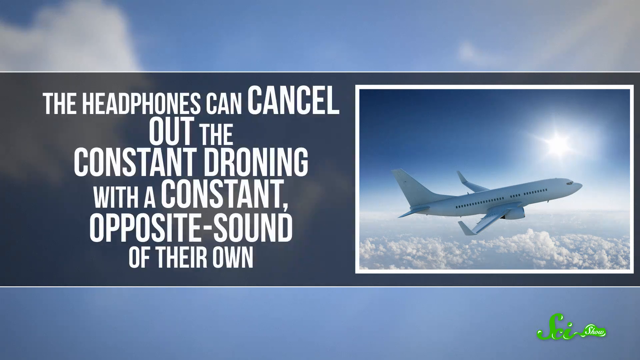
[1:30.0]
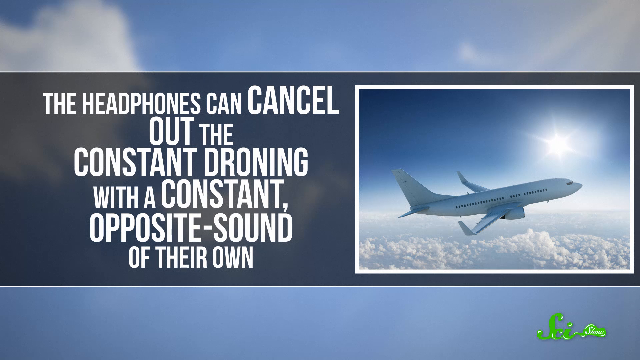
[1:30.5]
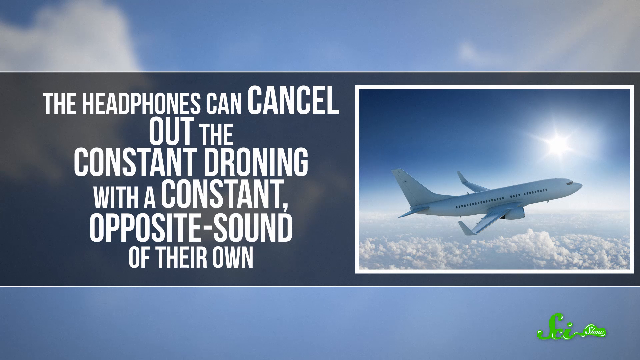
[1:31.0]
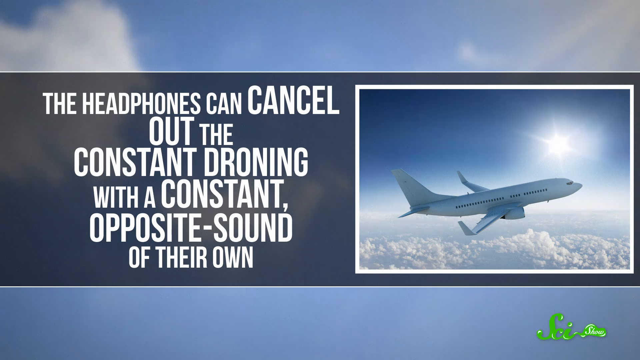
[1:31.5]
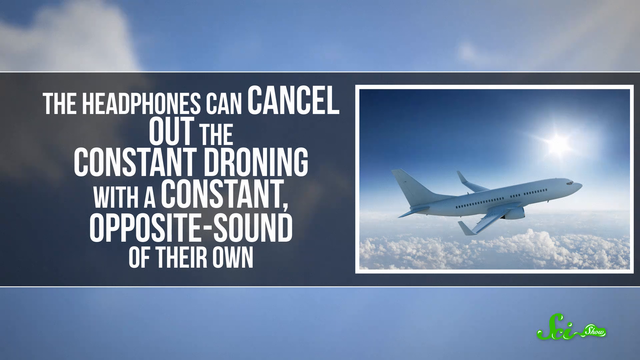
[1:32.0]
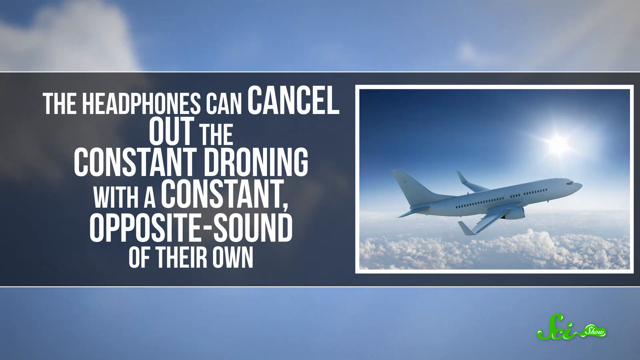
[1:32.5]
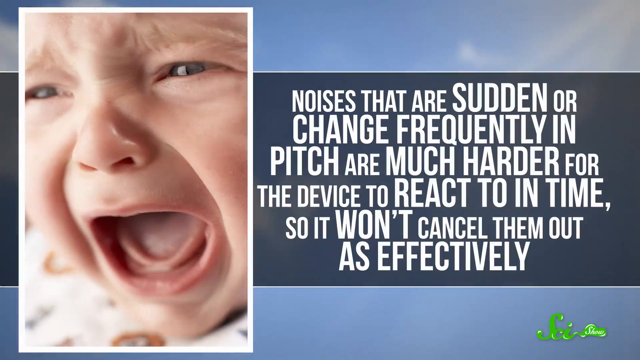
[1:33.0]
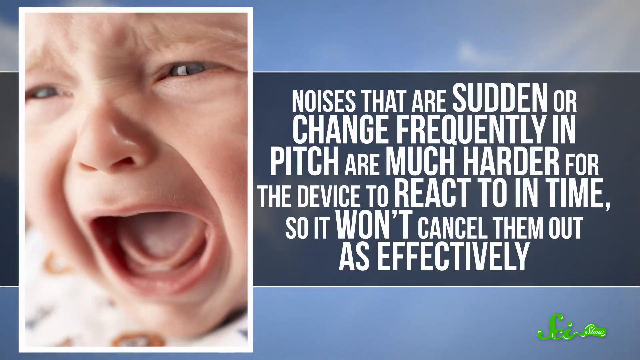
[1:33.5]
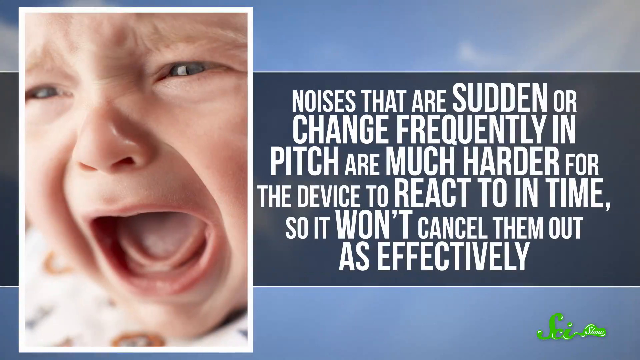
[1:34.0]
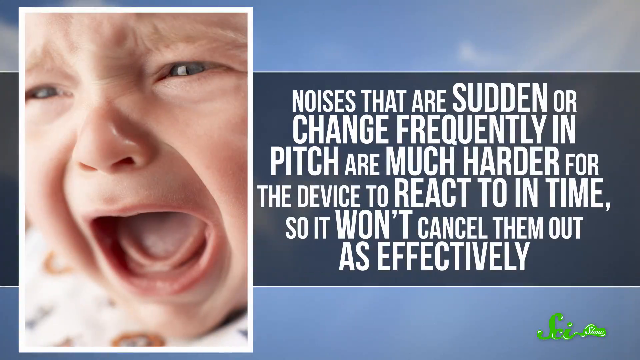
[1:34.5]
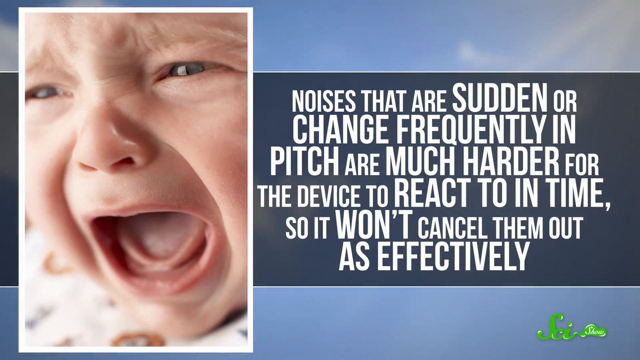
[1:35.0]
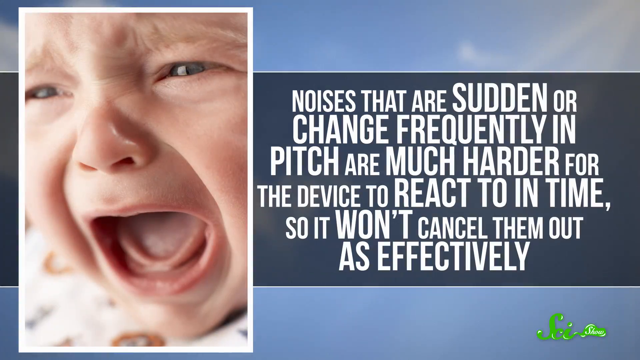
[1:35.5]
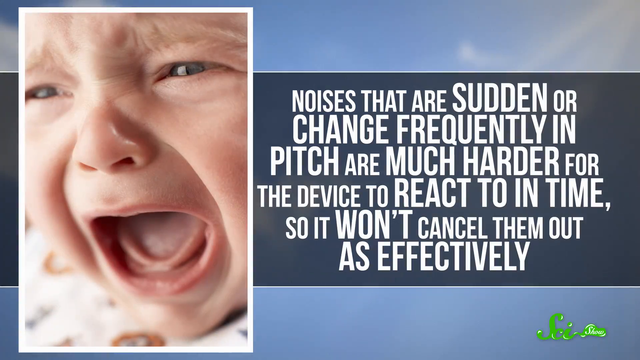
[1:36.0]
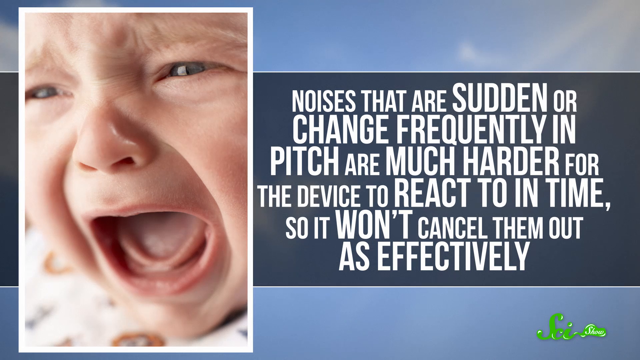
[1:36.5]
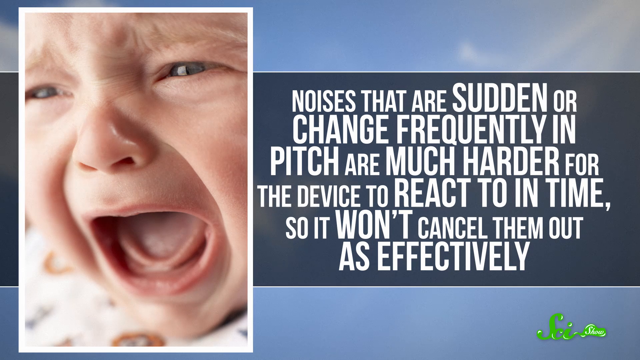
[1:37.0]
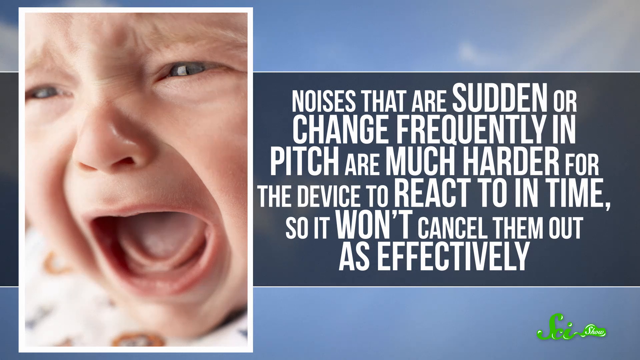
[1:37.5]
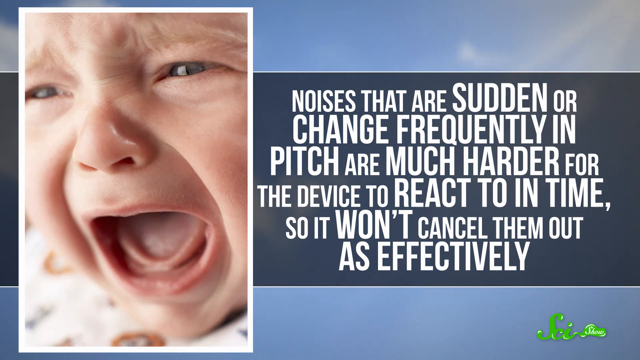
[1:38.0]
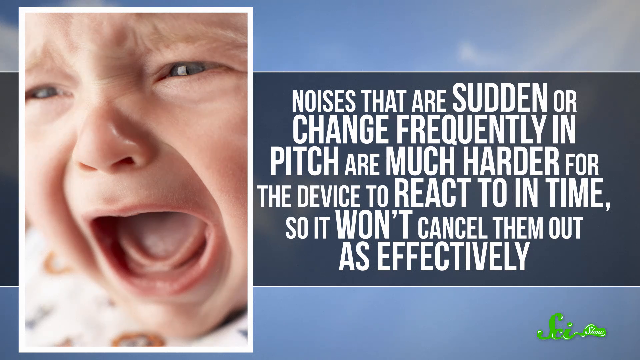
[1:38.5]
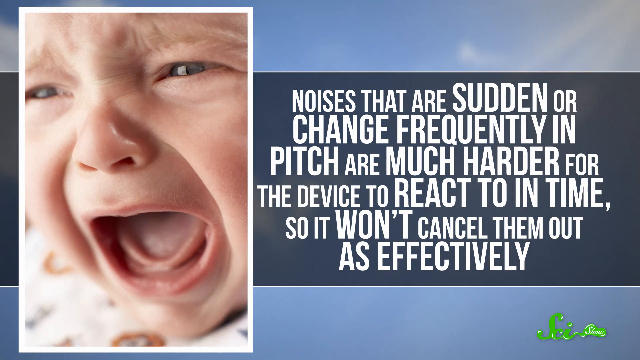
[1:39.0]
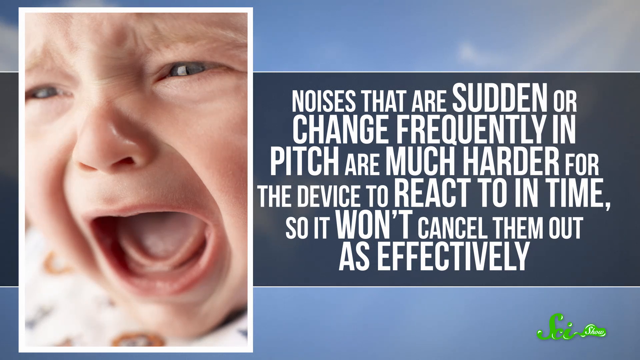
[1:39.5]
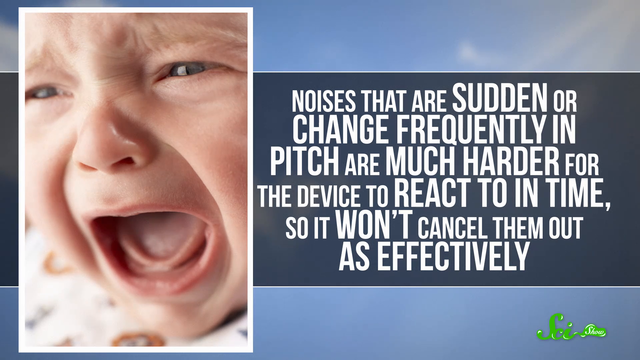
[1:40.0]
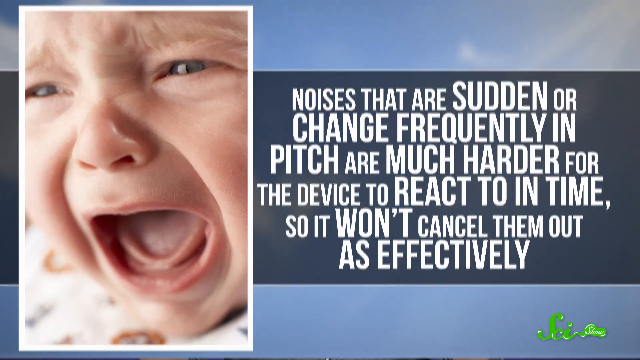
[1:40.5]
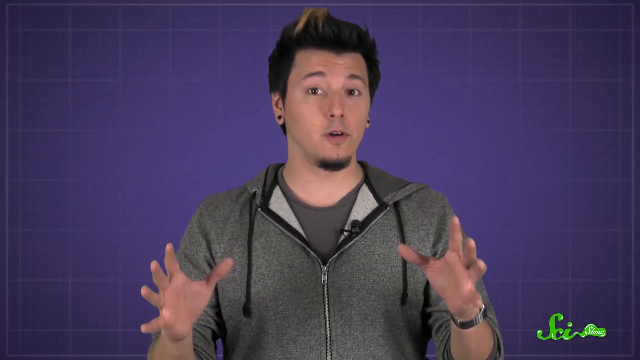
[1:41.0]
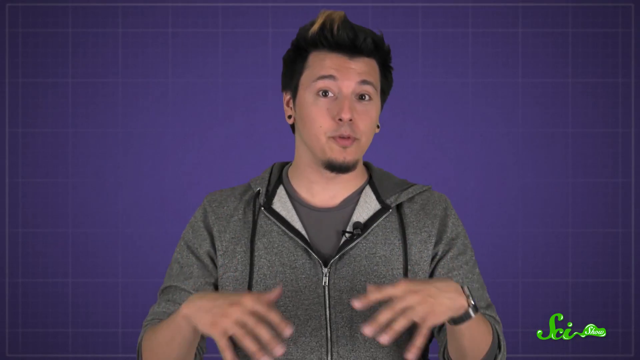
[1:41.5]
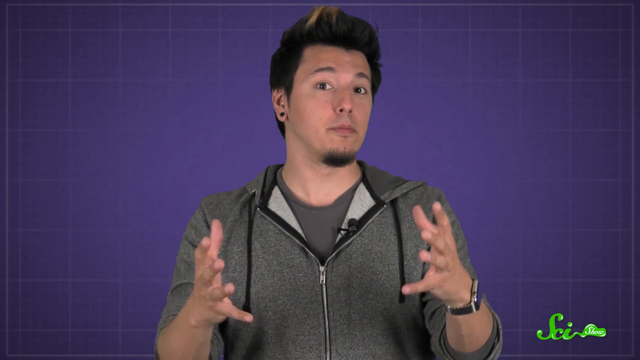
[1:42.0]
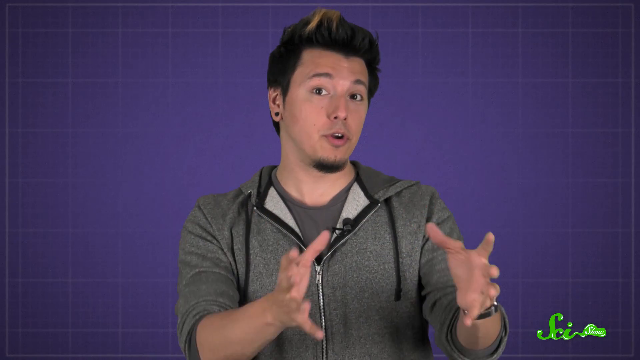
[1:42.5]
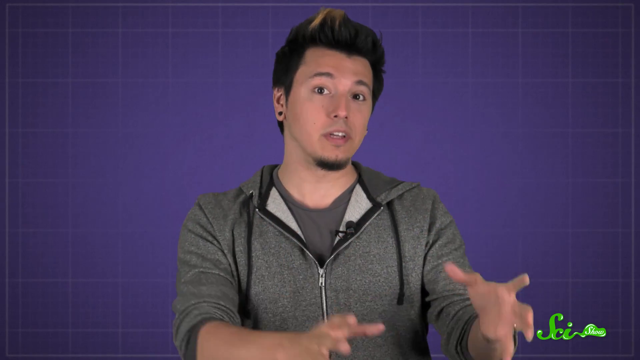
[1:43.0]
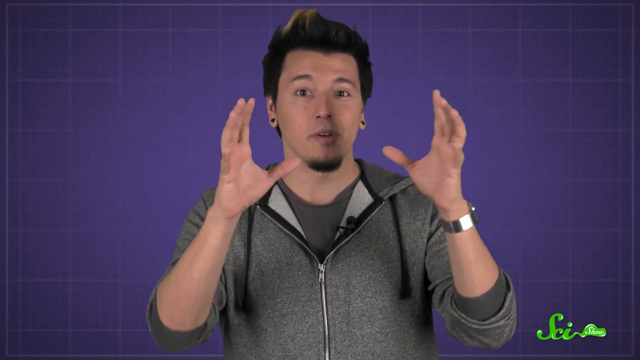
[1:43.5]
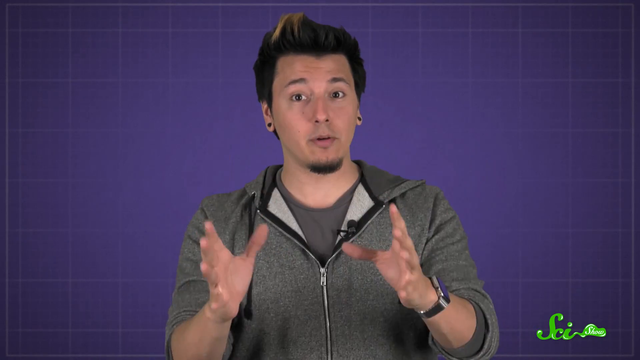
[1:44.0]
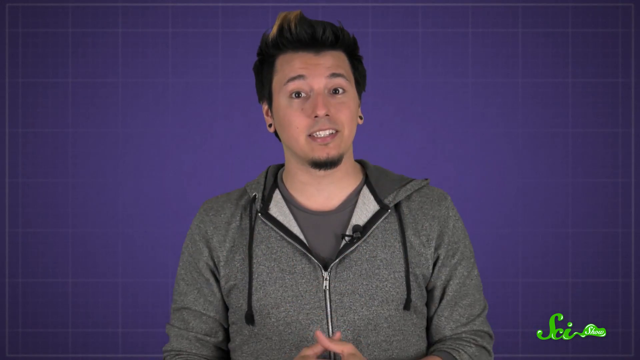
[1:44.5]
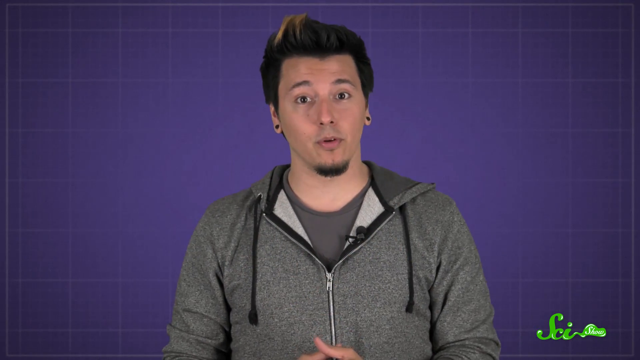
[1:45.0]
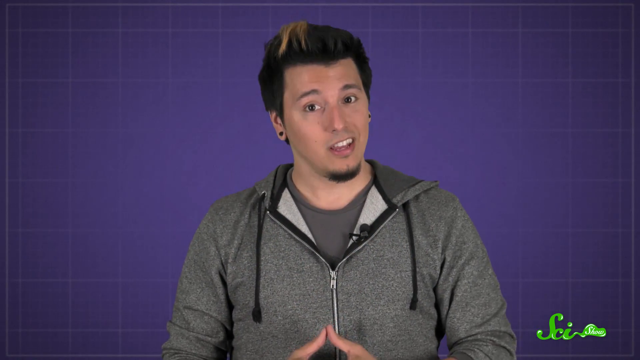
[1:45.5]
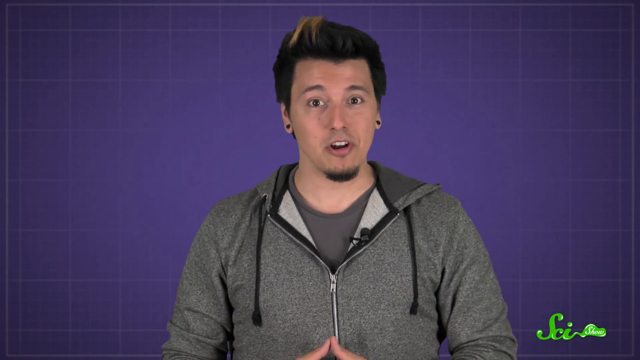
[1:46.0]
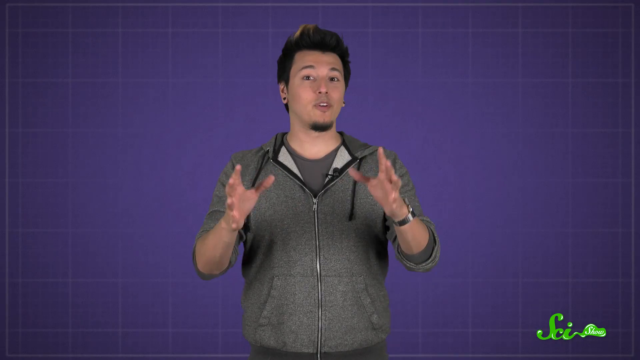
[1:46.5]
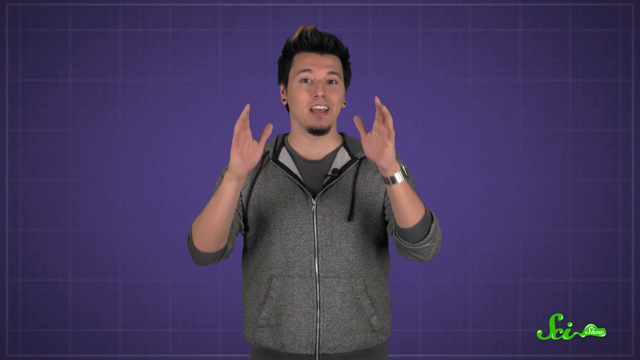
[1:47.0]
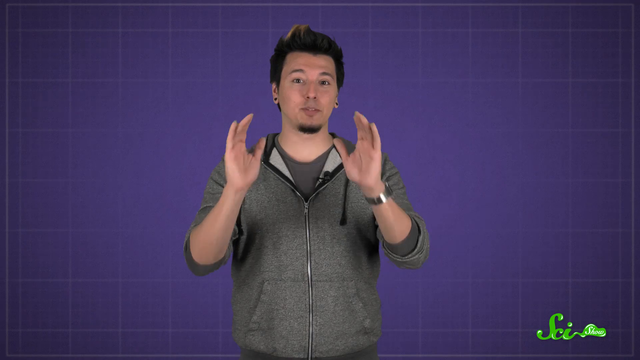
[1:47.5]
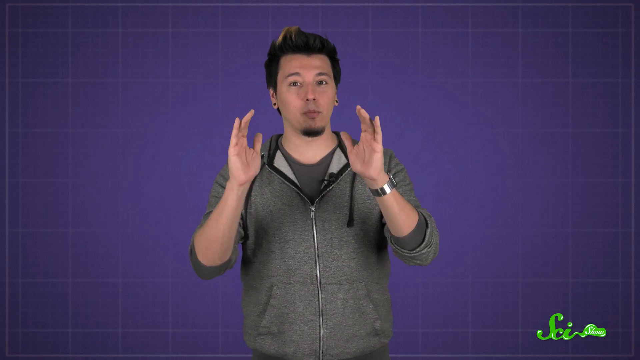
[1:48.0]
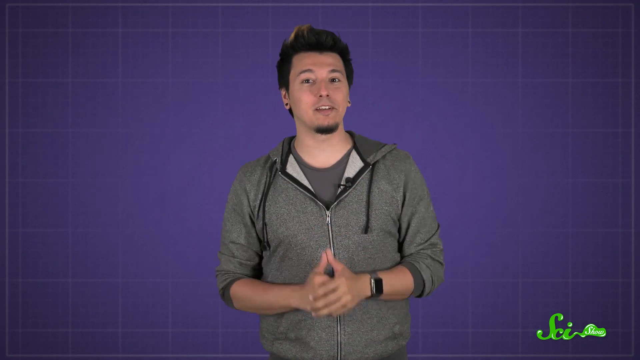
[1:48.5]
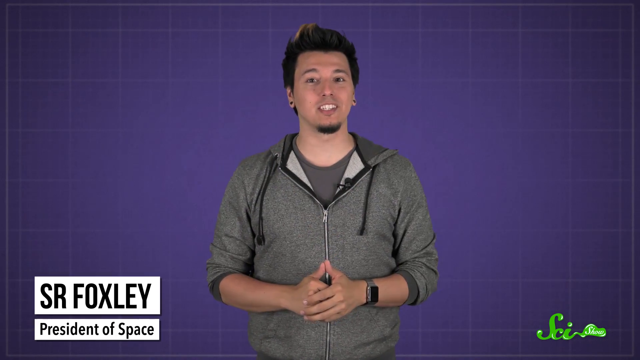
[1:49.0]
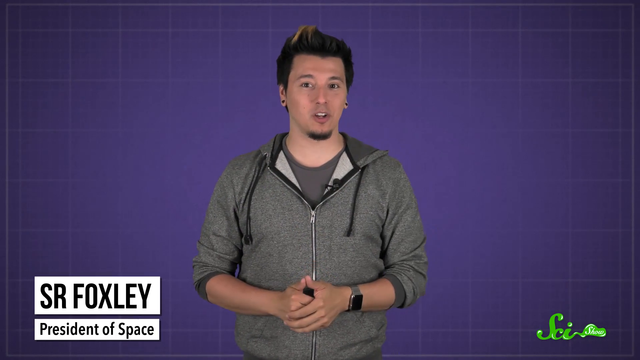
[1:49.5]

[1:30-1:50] The picture shows the airplane on the right-hand side flying in the sky, with some clouds kind of visible below it and blue sky above it, and the sun kind of protruding behind the plane. White block lettering begins "the headphones can cancel out the constant" and continues "with a constant opposite sound of their own." The video cuts to a different graphic: on the left is a crying baby, quite upset looking, with a white skin tone, brown eyes and the typical scrunched-up crying face of a baby. On the right, white block lettering begins "noises that are sudden or change frequently" and ends "so it won't cancel them out as effectively." The video then cuts back to the gentleman talking, gesturing a lot with his hands as he stands in front of the blue background.